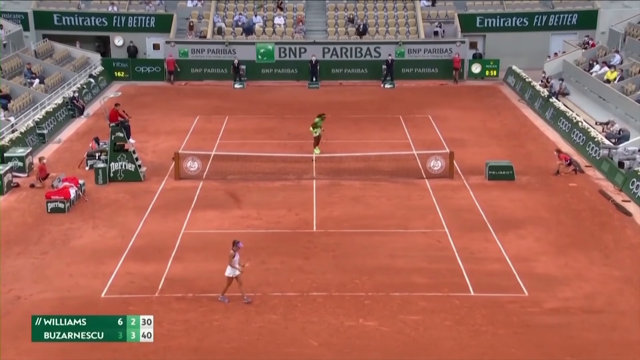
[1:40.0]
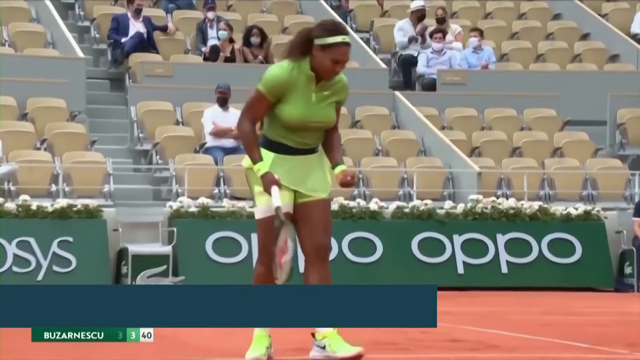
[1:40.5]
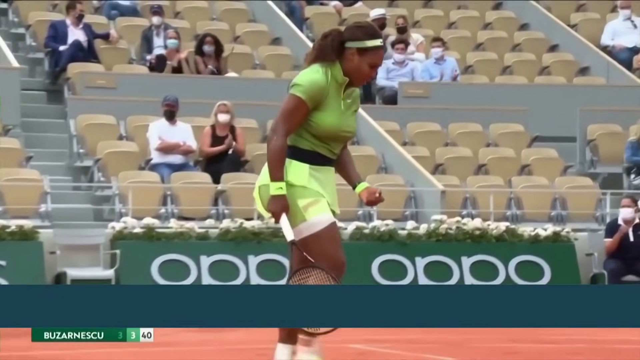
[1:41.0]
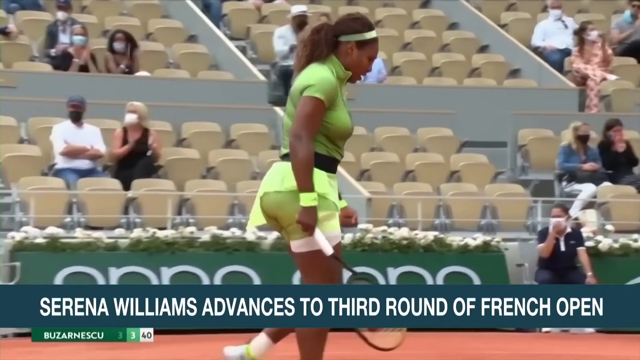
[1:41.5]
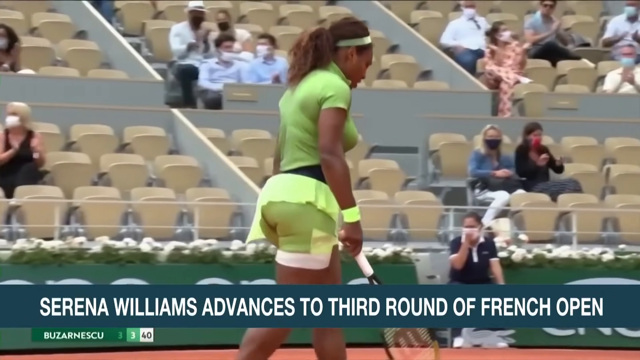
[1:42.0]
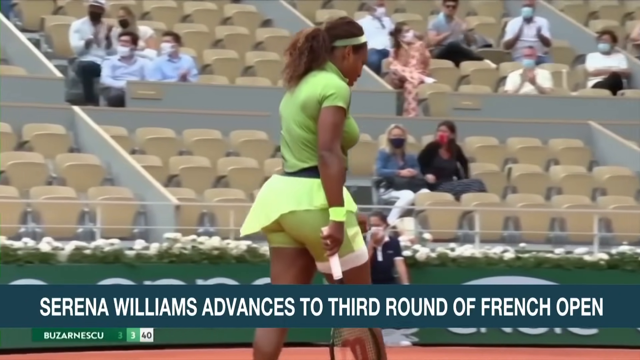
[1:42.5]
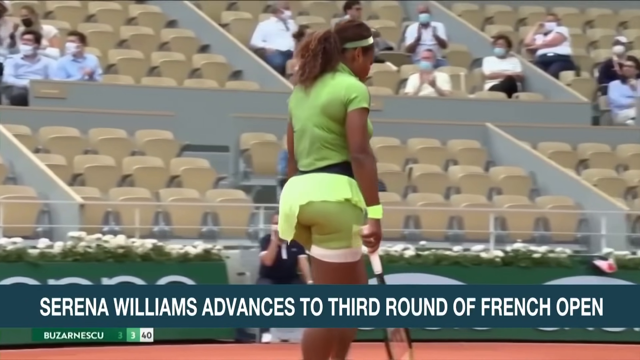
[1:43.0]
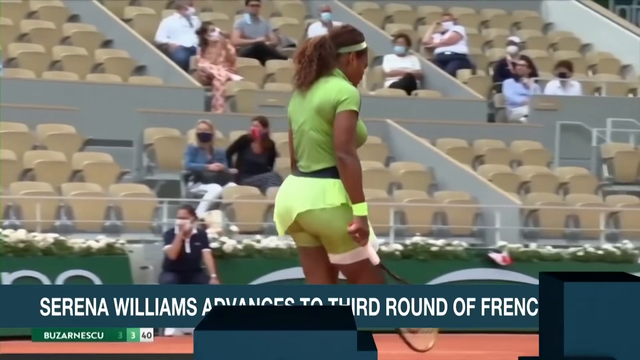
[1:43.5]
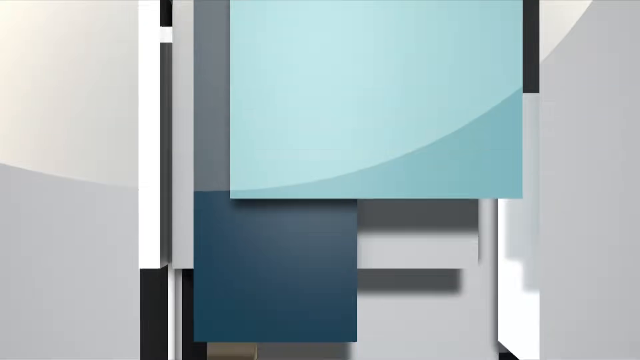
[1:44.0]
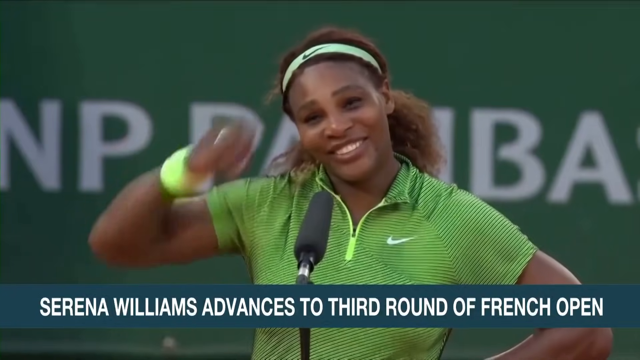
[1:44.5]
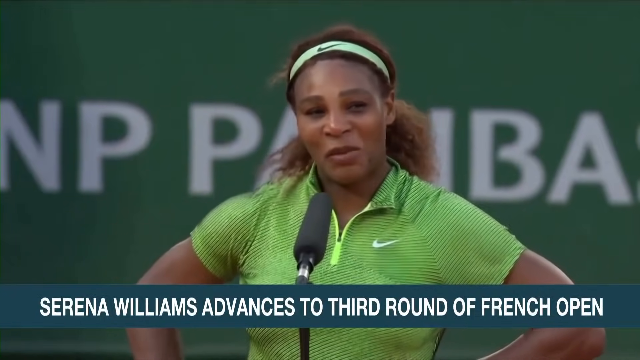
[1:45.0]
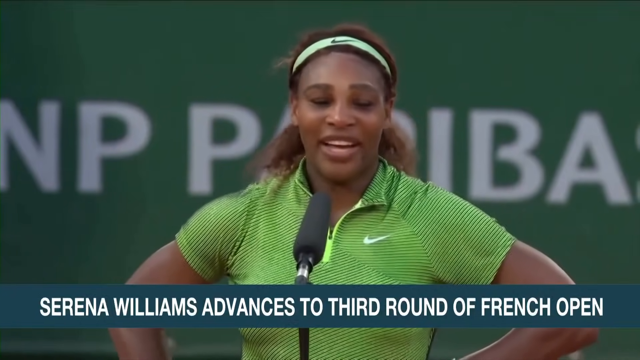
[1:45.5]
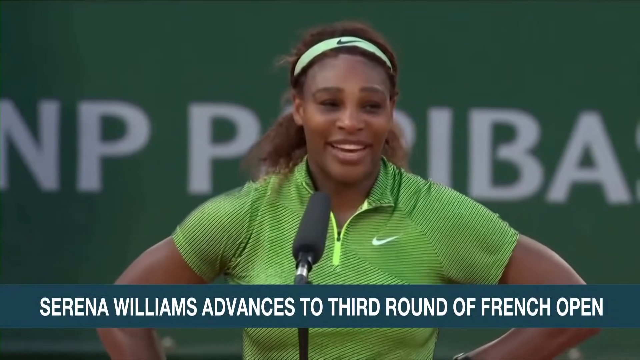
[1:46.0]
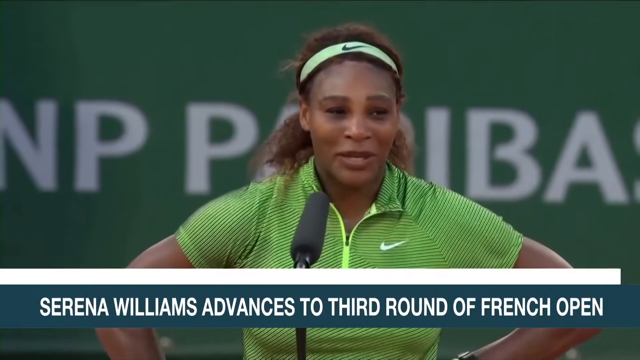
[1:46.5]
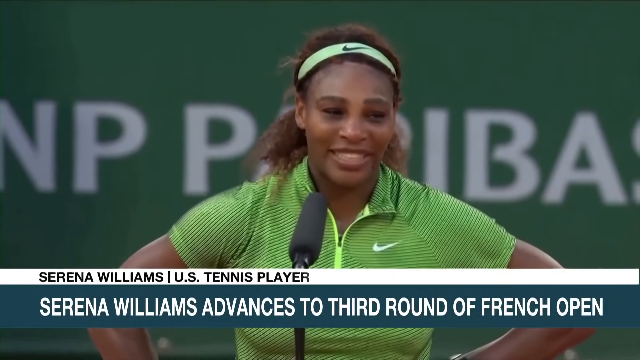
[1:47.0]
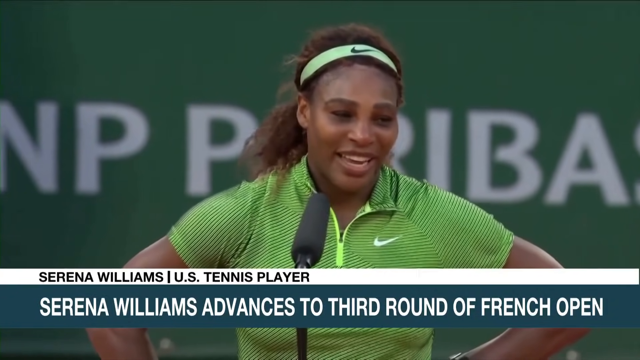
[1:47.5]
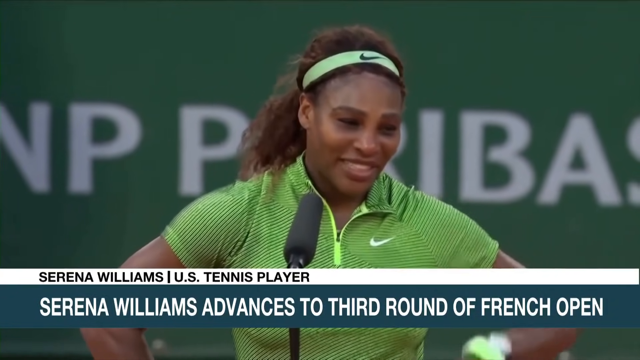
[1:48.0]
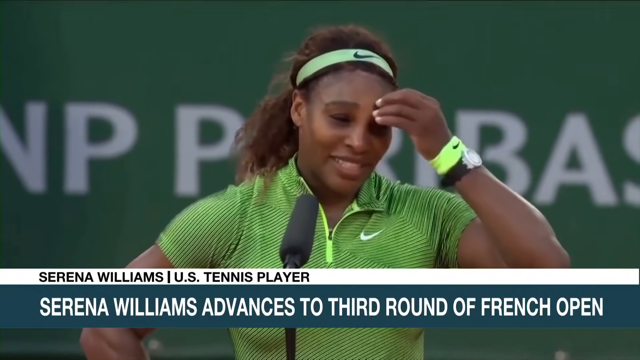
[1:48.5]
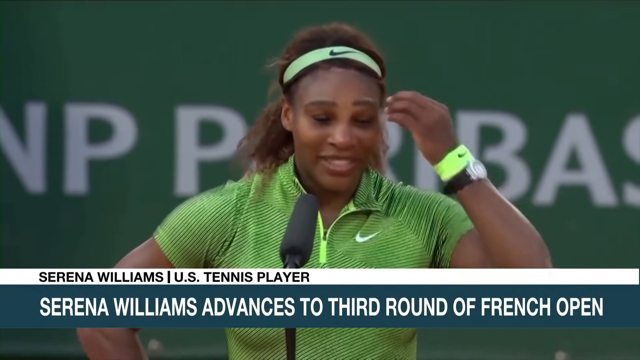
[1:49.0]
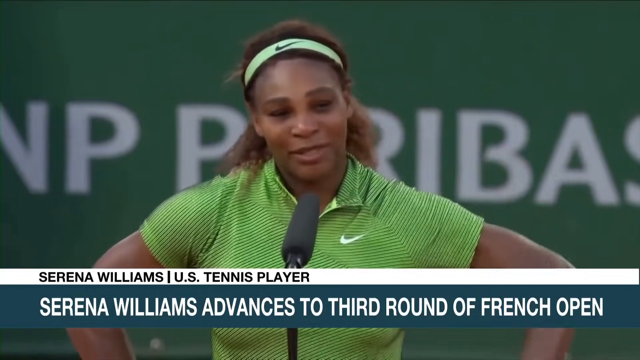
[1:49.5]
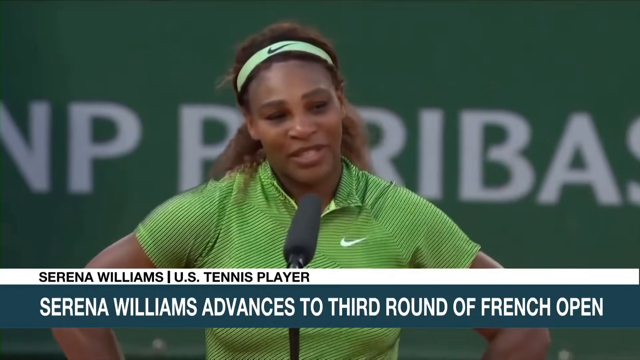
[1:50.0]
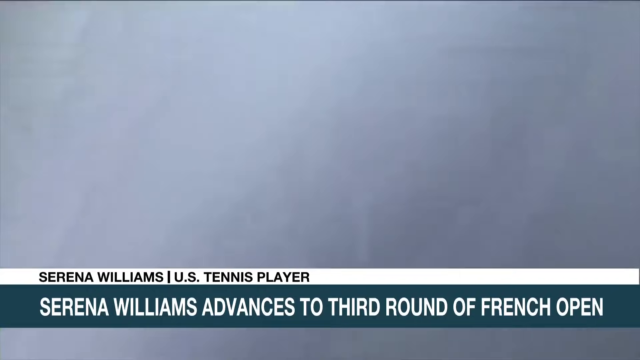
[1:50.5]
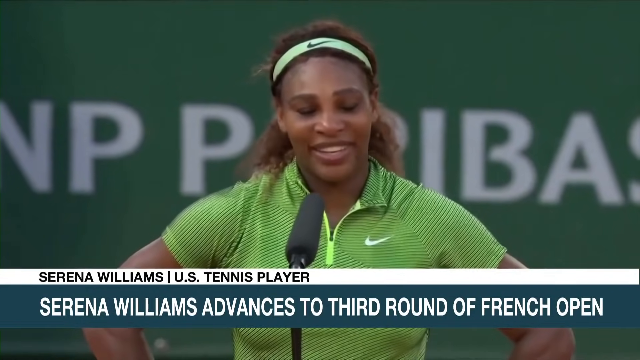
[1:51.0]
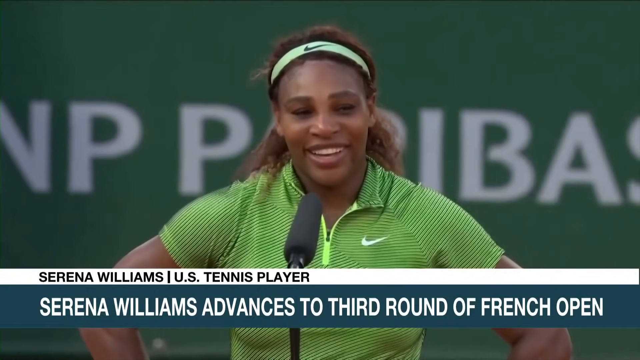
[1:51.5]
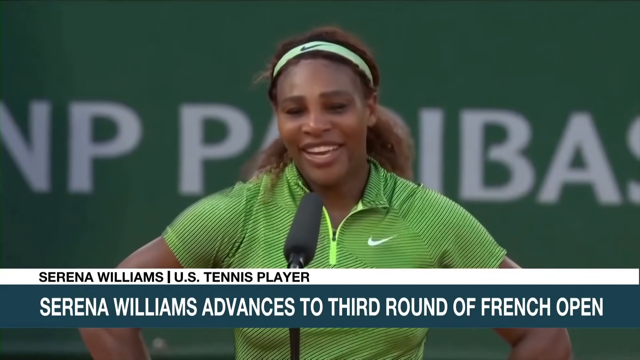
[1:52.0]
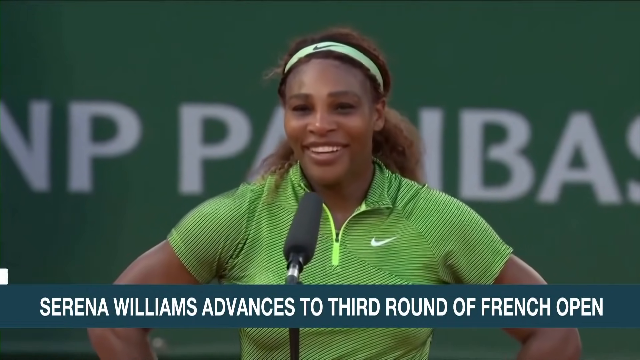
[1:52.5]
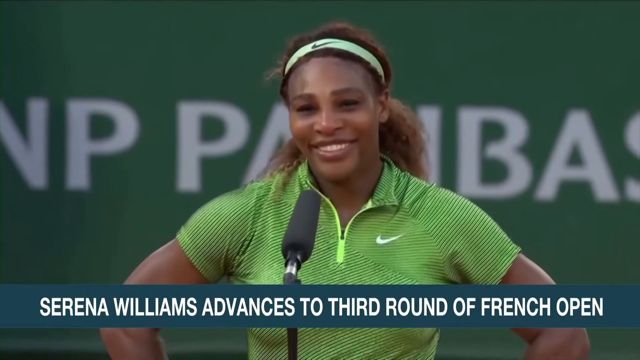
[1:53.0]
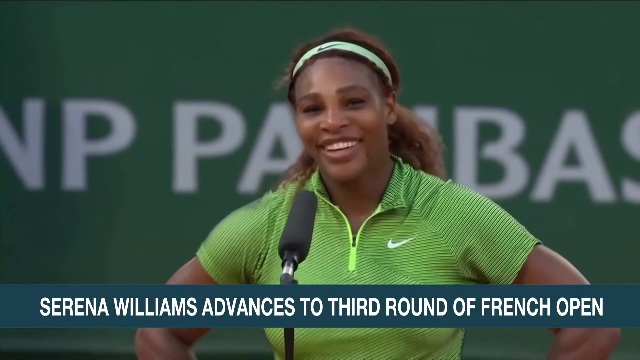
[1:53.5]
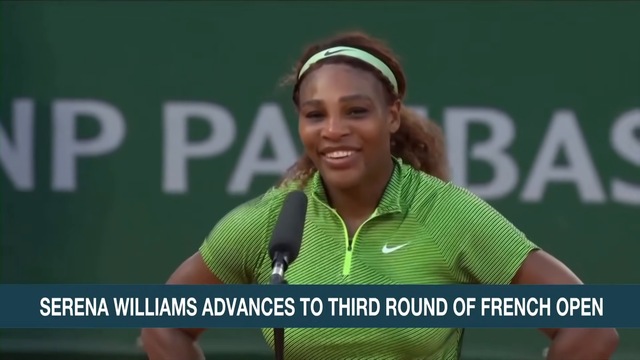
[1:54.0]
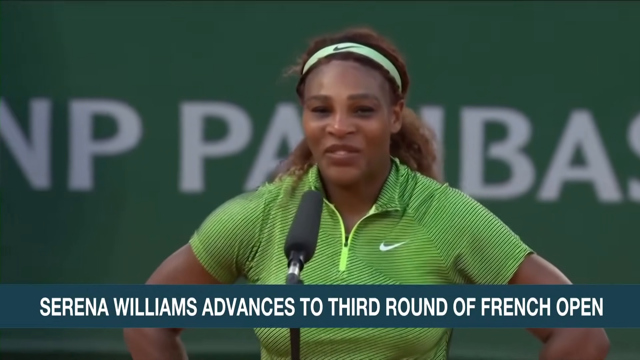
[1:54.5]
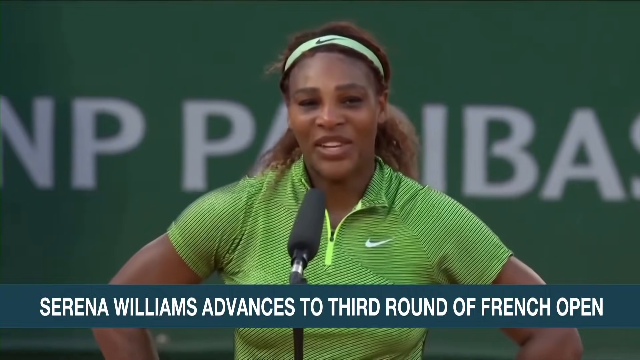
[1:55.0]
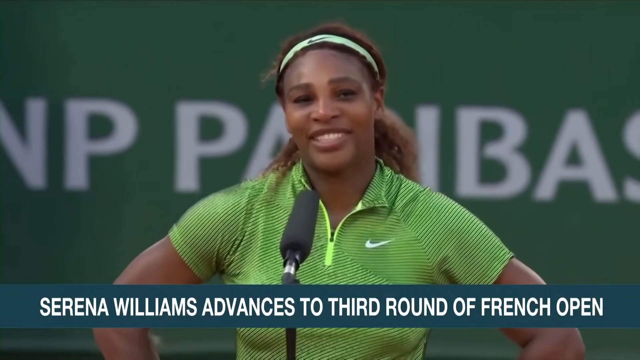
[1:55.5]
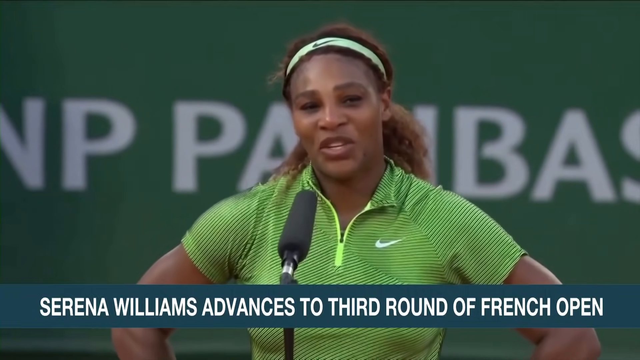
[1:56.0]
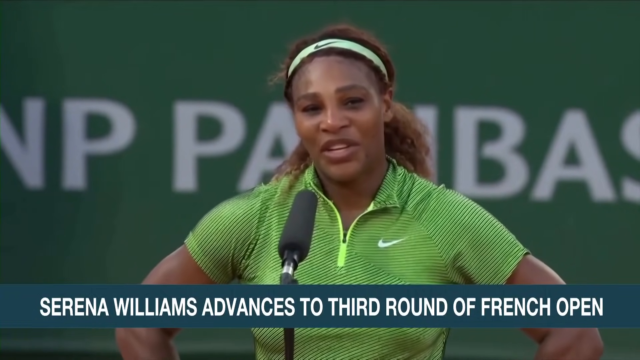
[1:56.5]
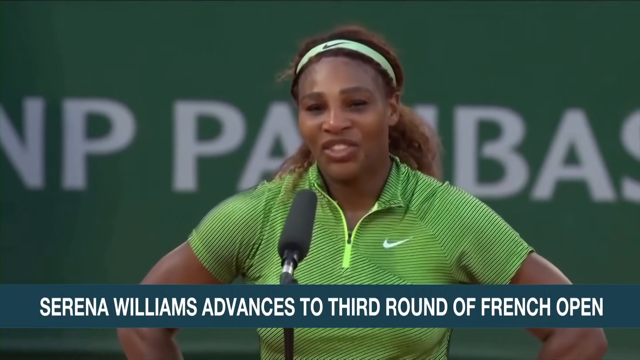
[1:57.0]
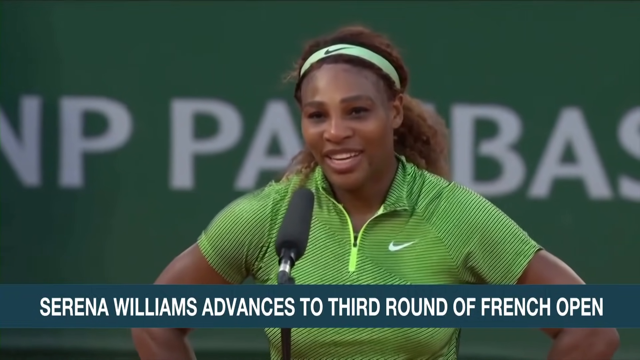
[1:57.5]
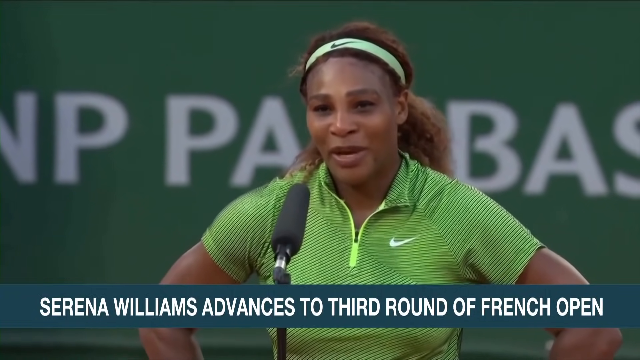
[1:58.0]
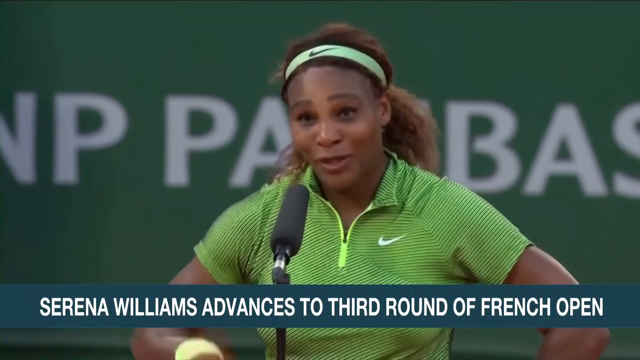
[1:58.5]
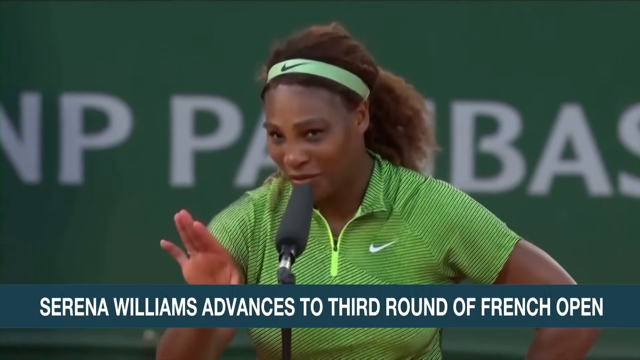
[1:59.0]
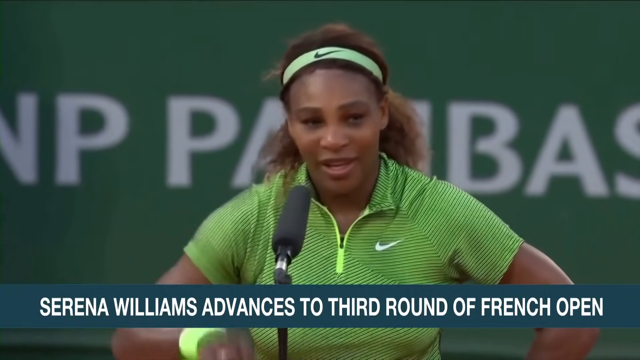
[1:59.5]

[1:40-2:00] The tennis court appears to be made of reddish clay. The stands are not full, but plenty of spectators are watching the match. In the background, green banners on the left and right sides of the screen read "Emirates fly better" in white letters, and the words "BNP Paribas" appear with a logo next to these signs. Serena Williams, wearing a green skirt, green shirt and green headband, plays an opponent dressed in white. At the bottom of the screen, text reads "Serena Williams advances the third round of French open." The video then cuts to Serena Williams being interviewed while standing at a microphone, with a green background showing the advertisement for the match behind her. The words "Serena Williams, U.S. tennis player" flash on the screen. She has dark skin and dark hair, and she smiles as she looks into the crowd while she talks, with her hands placed on both hips.